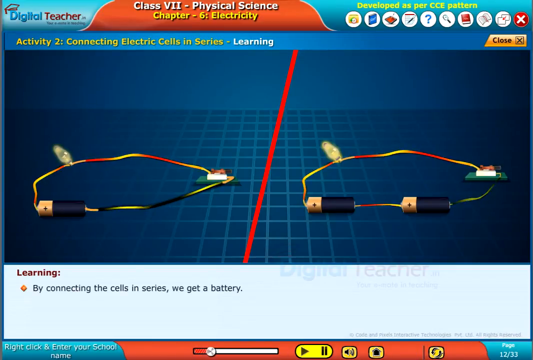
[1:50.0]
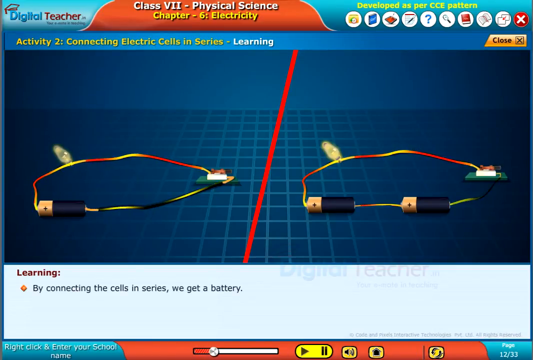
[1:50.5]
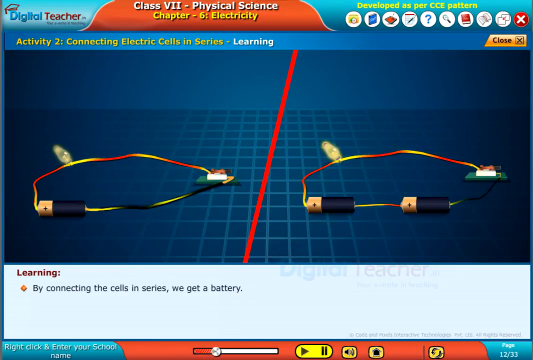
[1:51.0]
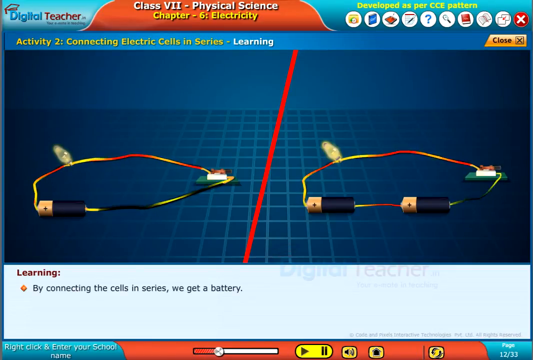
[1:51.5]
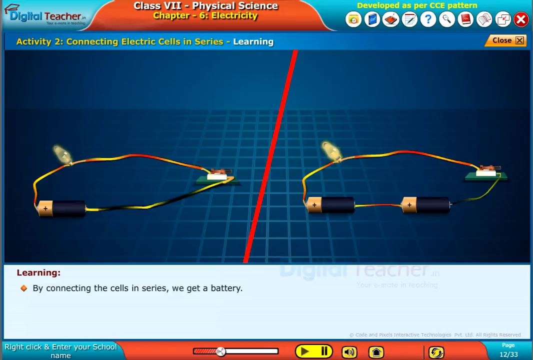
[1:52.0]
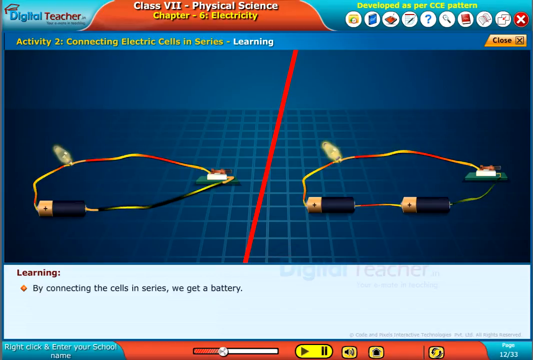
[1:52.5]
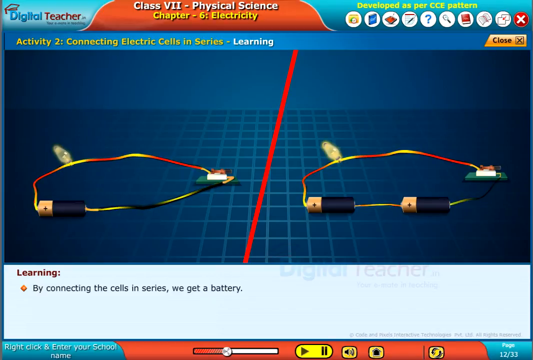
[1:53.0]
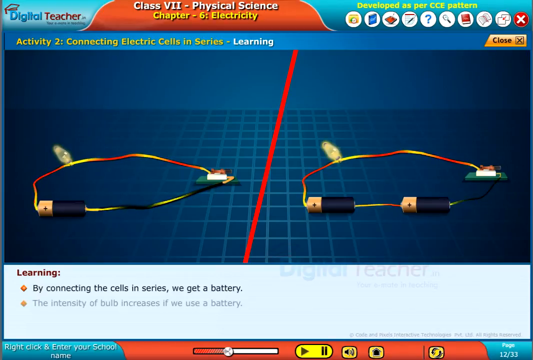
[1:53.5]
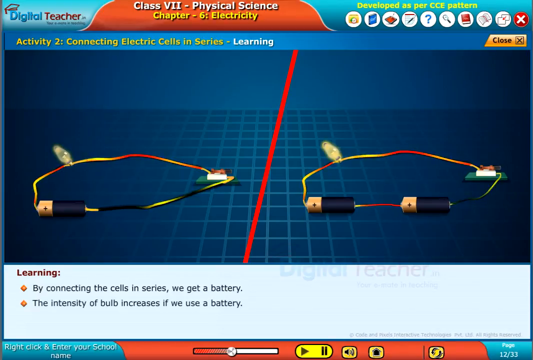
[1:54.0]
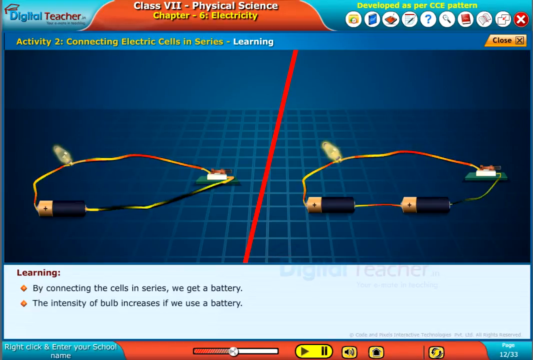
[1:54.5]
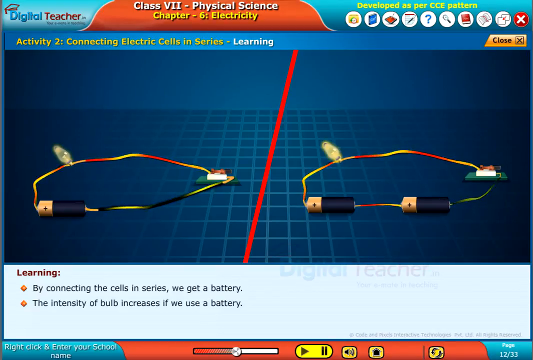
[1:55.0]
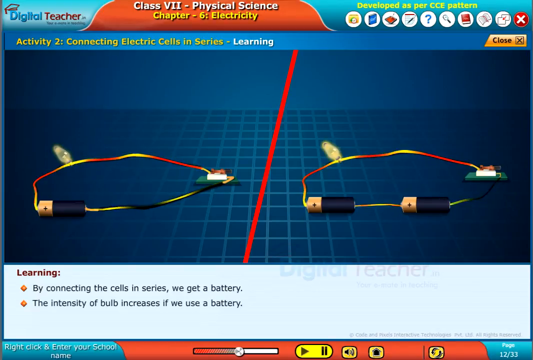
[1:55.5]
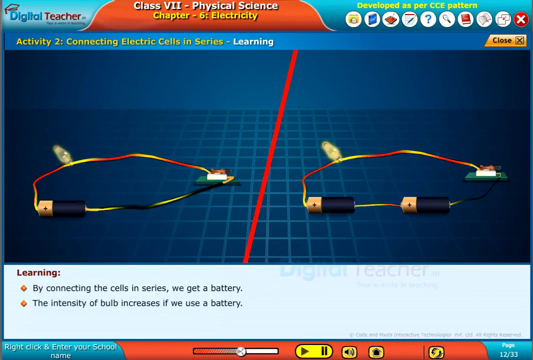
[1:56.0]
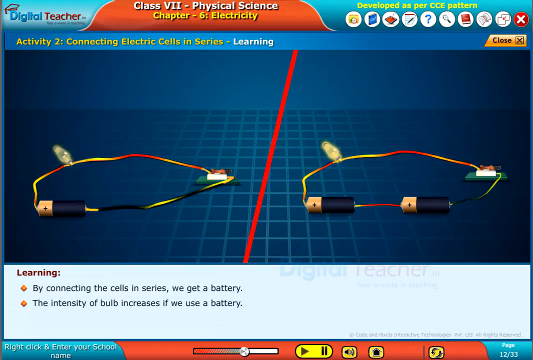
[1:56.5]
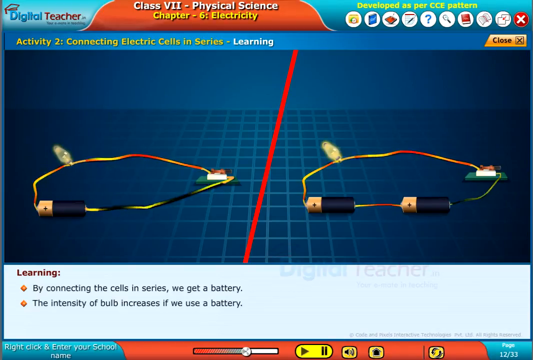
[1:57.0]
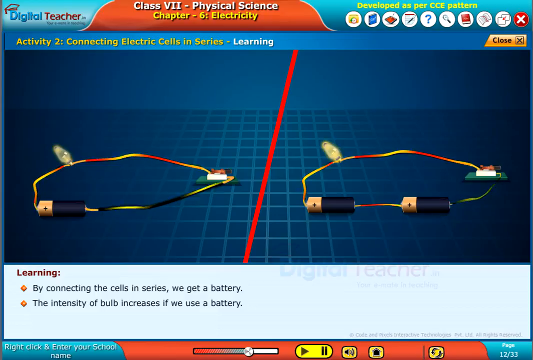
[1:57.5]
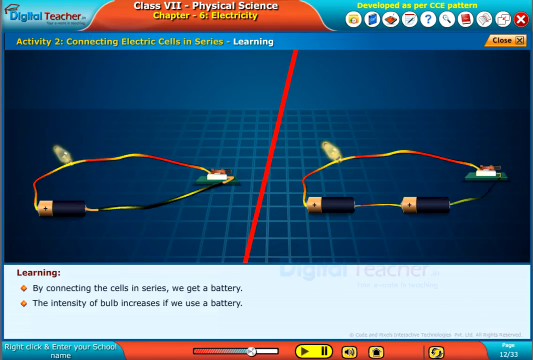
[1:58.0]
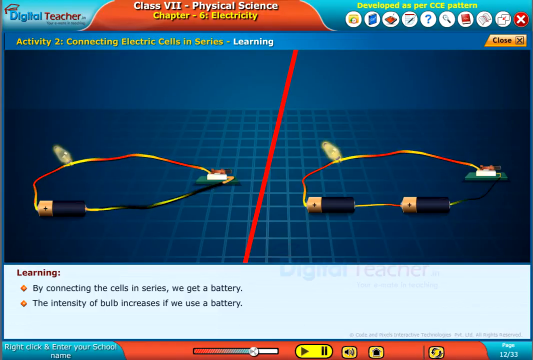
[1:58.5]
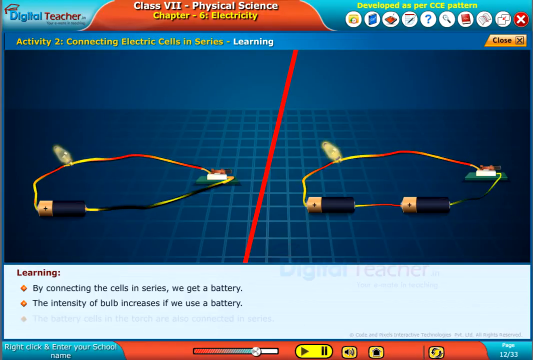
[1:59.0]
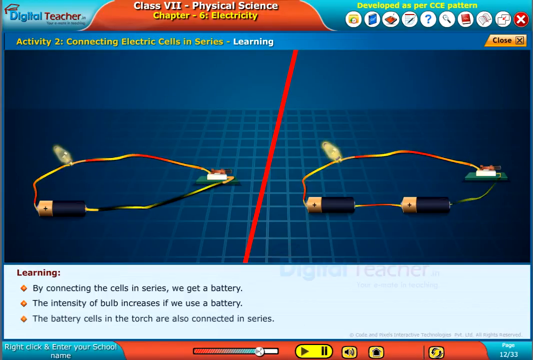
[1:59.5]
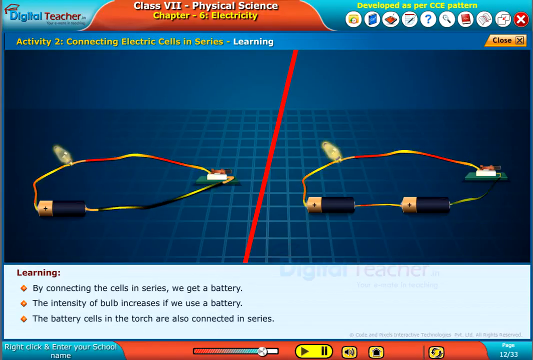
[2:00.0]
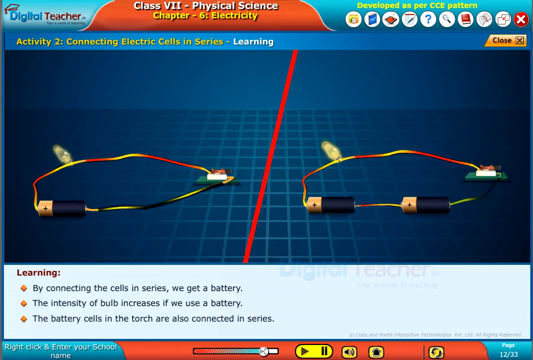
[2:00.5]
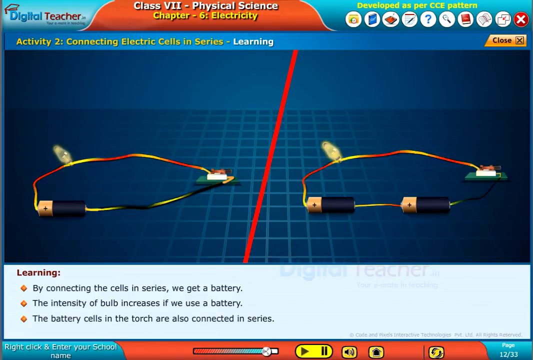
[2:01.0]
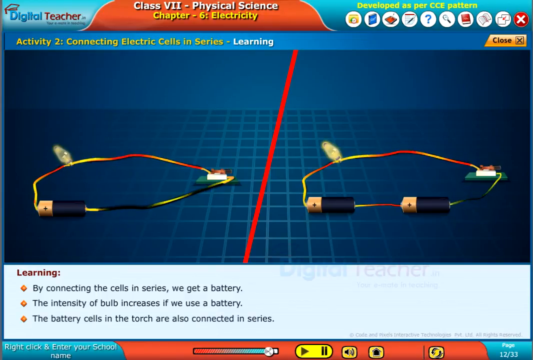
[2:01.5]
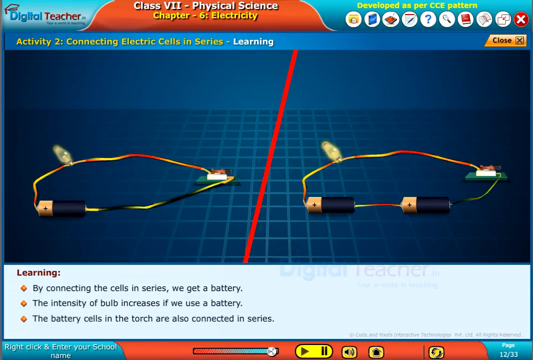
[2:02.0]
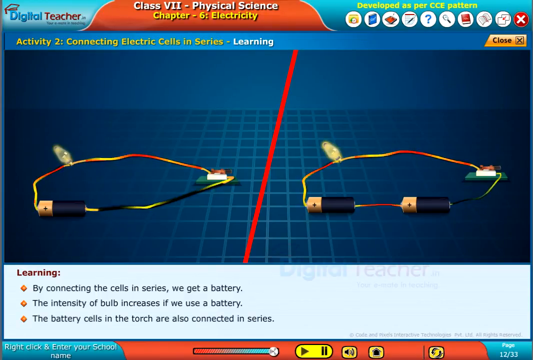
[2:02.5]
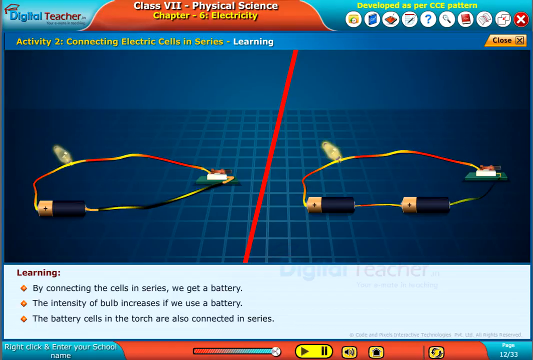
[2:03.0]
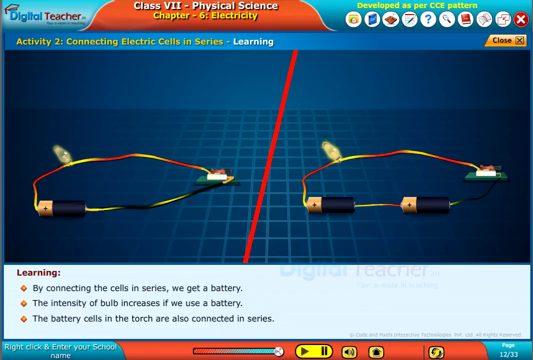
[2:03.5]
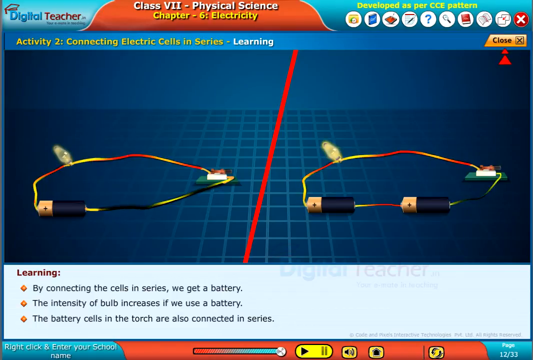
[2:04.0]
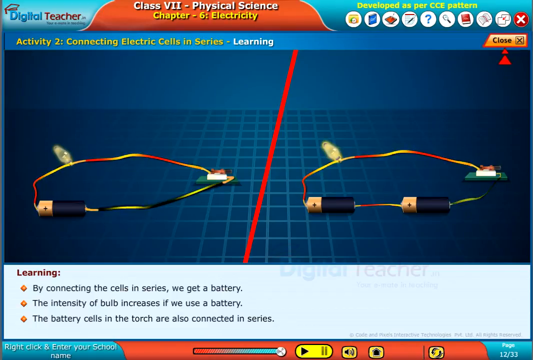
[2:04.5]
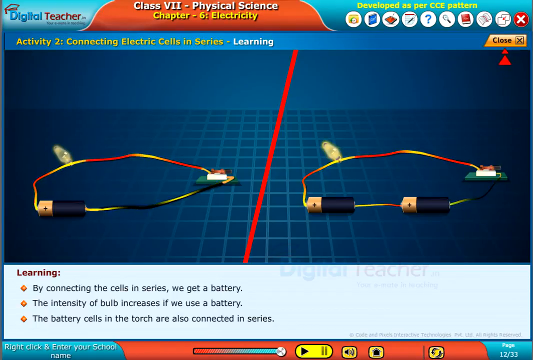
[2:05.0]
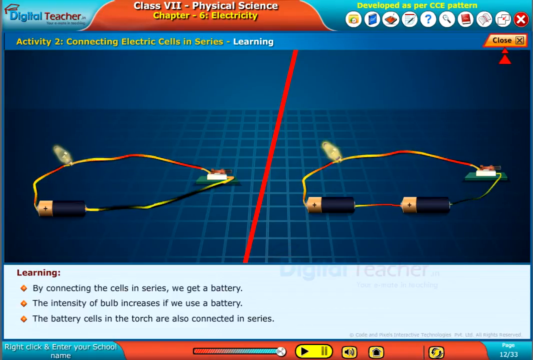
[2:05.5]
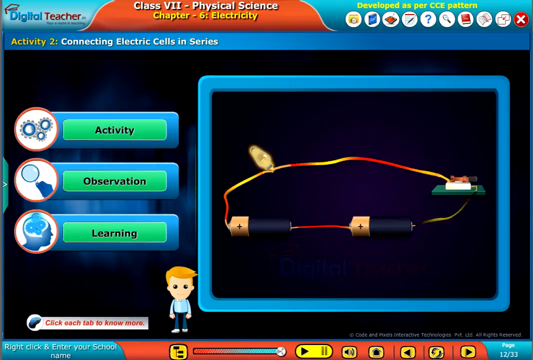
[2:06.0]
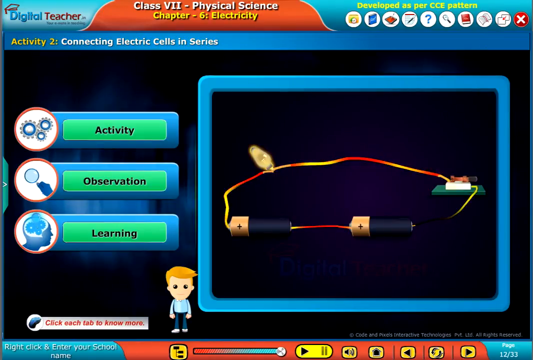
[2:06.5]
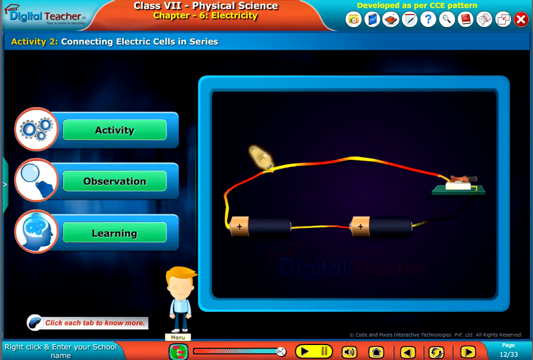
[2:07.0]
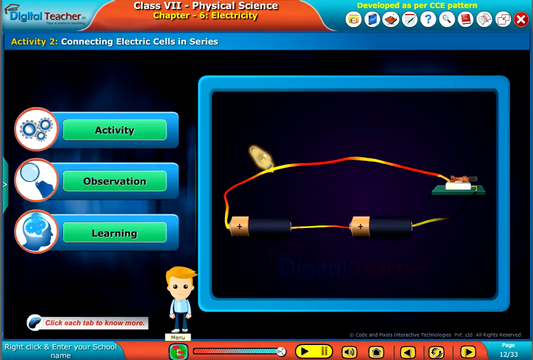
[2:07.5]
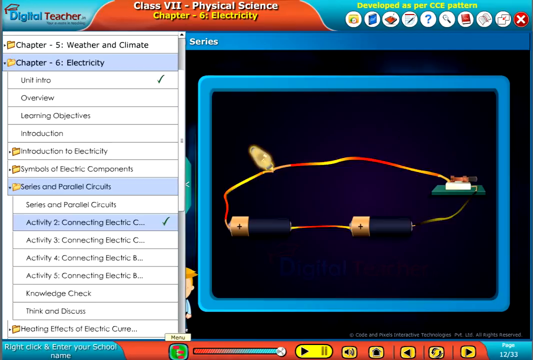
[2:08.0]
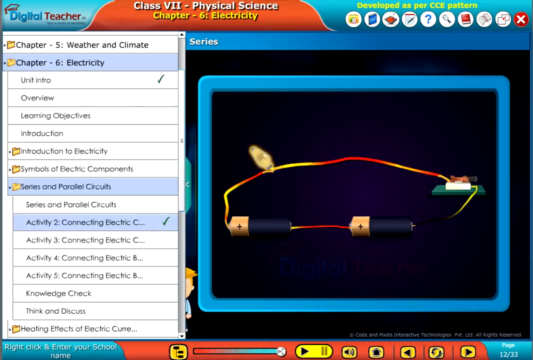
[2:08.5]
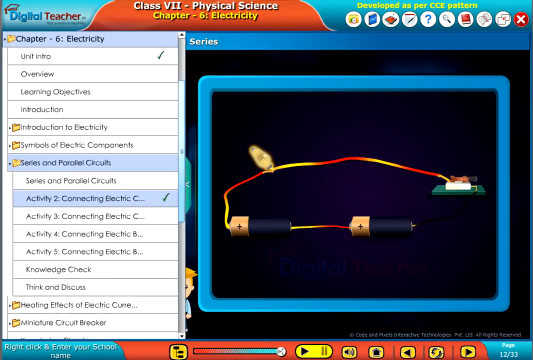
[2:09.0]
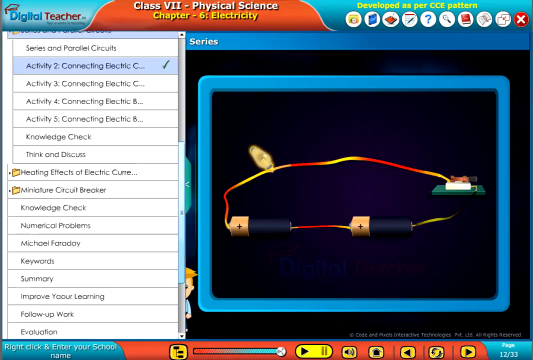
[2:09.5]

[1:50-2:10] On the same screen, "learning" appears at the bottom in red, with a bullet beneath: "by connecting the cells in a series we get battery", which both sides are showing. Both sides look like they are on graph paper. A couple more bullets come down: "the intensity of the bulb increases if we use a battery" and "the battery cells in the torch are also connected in series". The video then cuts back to just the two batteries on what is sort of the opening screen, with the little guy and the three tabs. A pop-up menu is pulled up, still on the electricity screen, with "activity 2" highlighted for connecting the circuit. There are about 12 different items to click under electricity. Above that is "weather and climate", which is not clicked.